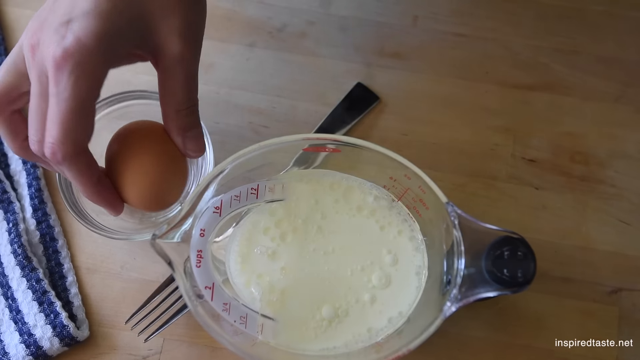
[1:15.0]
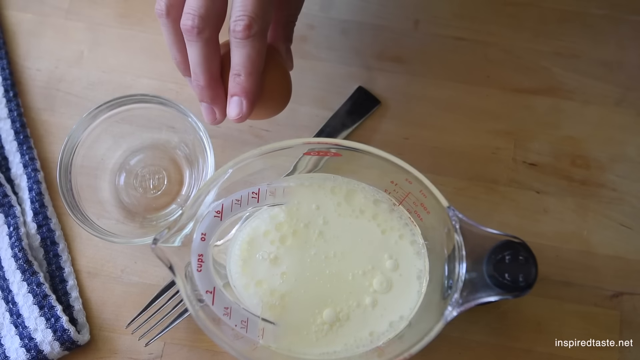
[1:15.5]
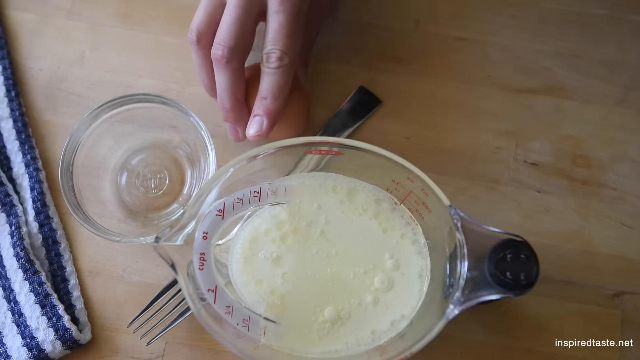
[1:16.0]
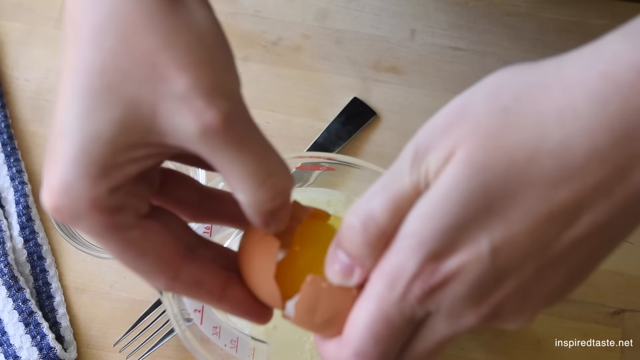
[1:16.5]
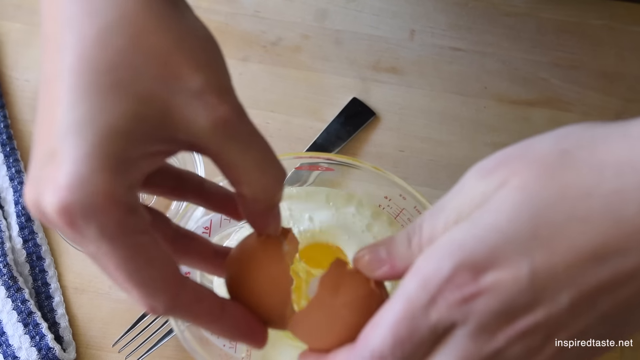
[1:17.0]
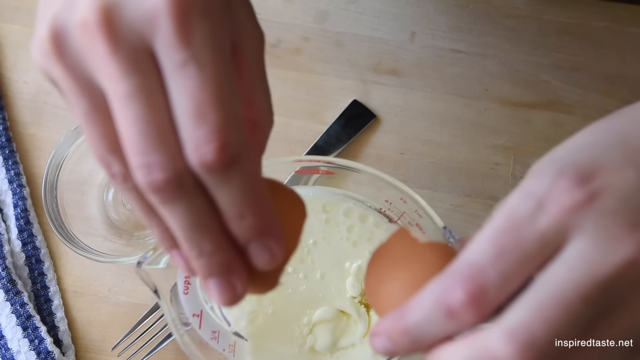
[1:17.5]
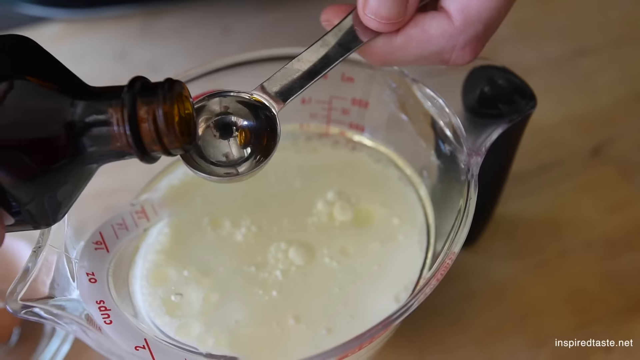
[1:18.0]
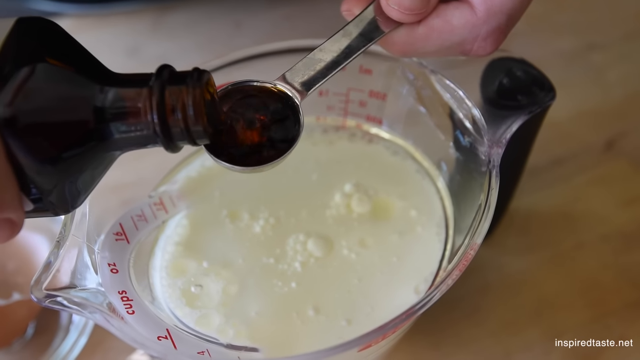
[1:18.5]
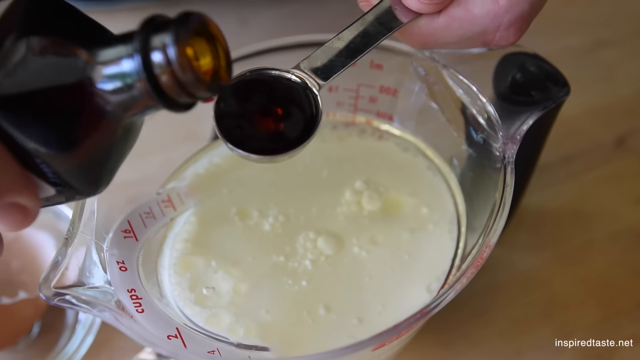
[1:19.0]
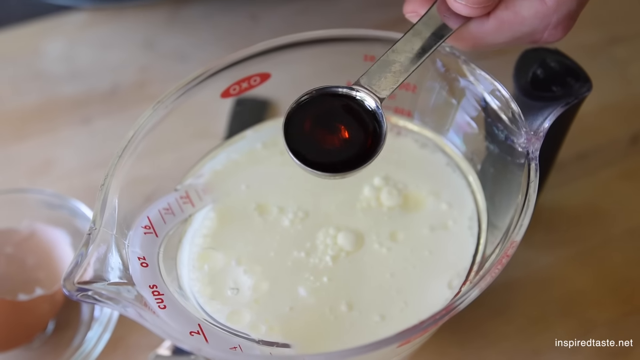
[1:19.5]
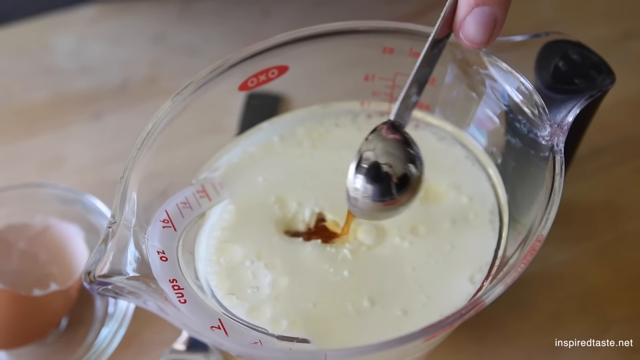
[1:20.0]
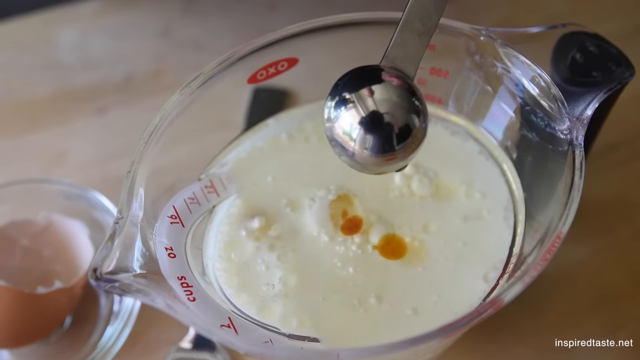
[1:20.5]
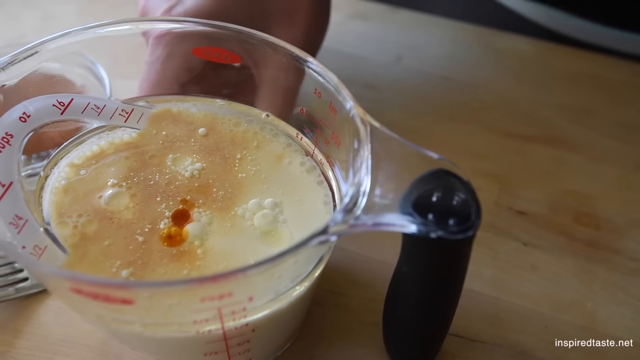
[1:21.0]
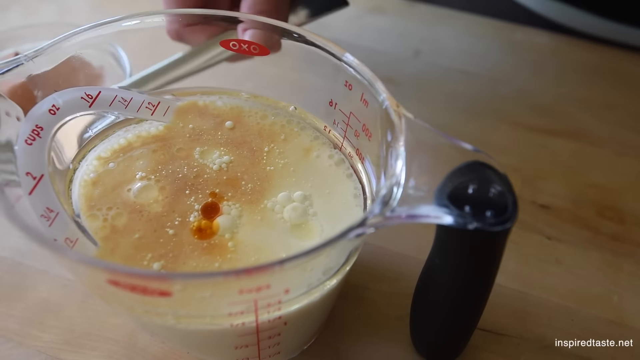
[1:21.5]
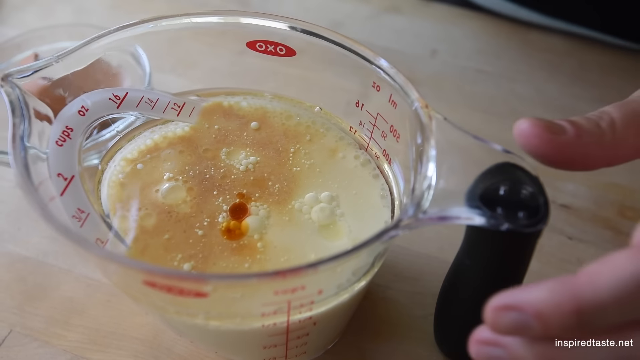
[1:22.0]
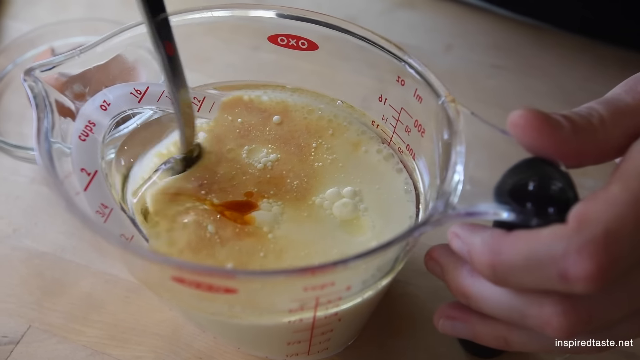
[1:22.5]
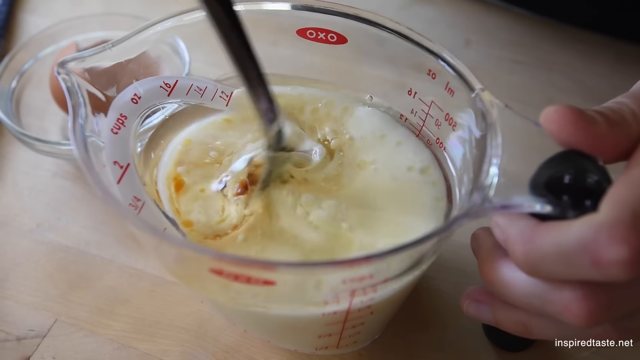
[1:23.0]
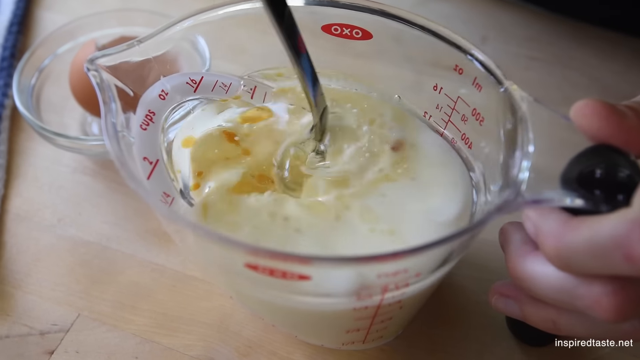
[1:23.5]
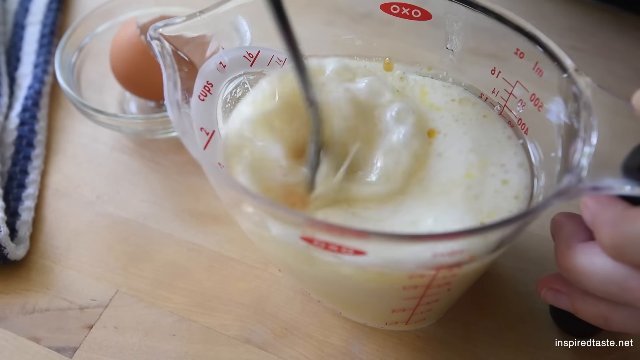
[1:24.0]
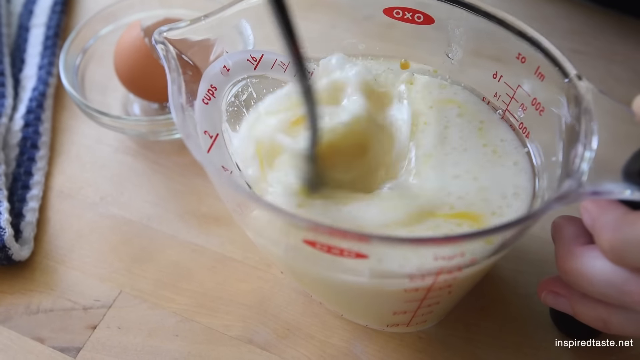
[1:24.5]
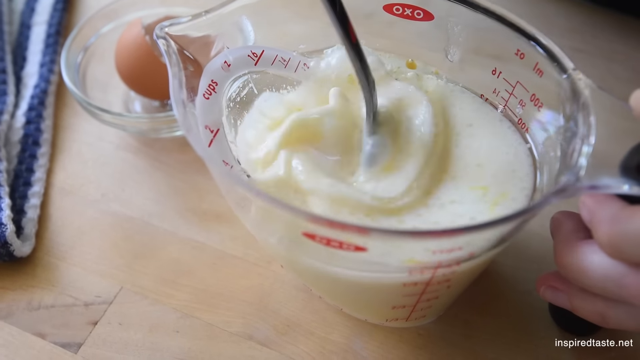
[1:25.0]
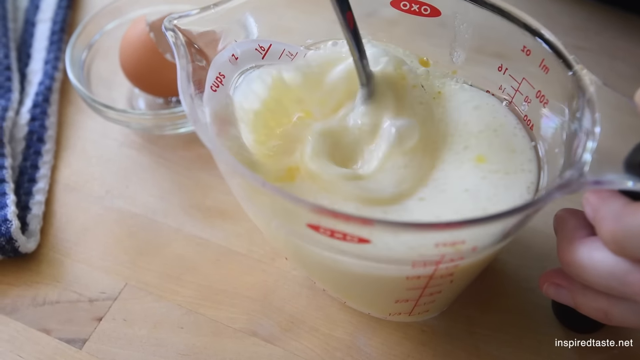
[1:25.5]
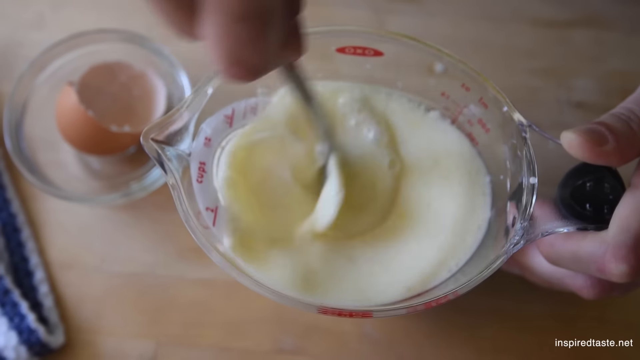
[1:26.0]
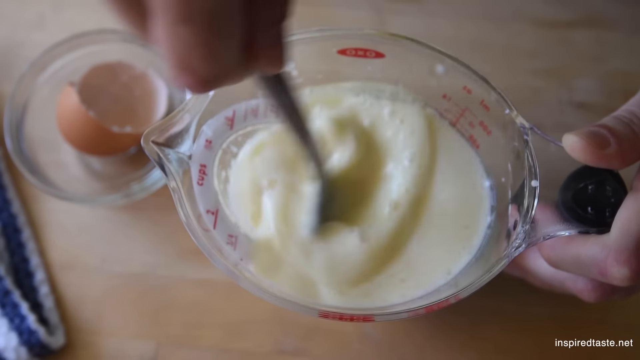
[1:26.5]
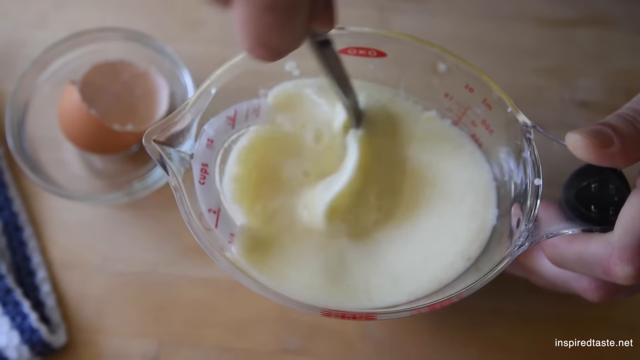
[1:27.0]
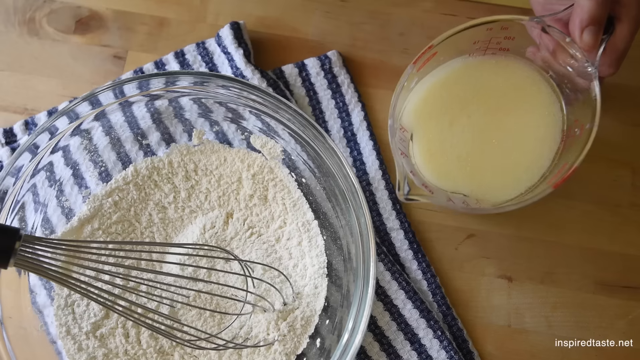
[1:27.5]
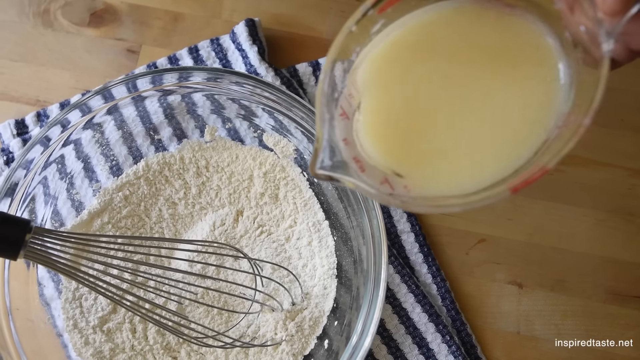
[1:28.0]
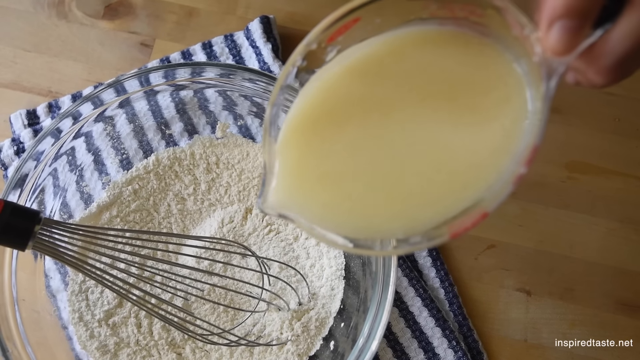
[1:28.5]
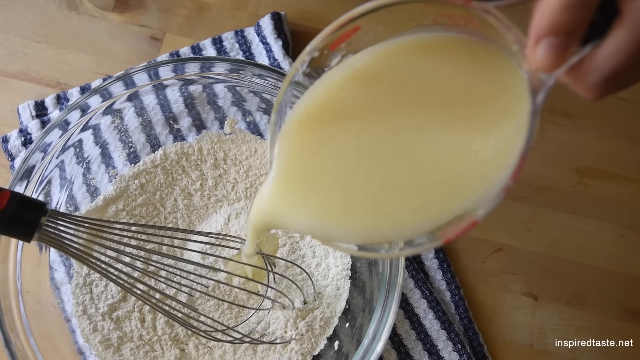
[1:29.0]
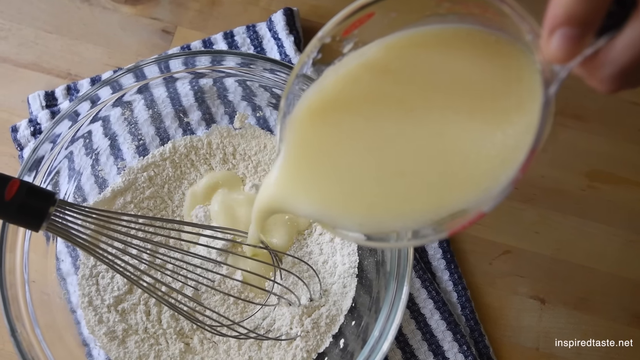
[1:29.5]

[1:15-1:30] The video, titled "Easy Crispy Waffles Recipe", shows a thumbnail of a stack of waffles cut into triangles on a white plate, with butter and syrup on them and cut-up strawberries to the left. After play is pressed, a woman cracks an egg on the table and drops it into a measuring cup that has milk and oil, then adds vanilla. The ingredients are added one by one. The wet ingredients are stirred with a fork held in the right hand. The beginning of pouring the wet ingredients into the bowl of dry ingredients is shown; that bowl has a whisk sitting in it.